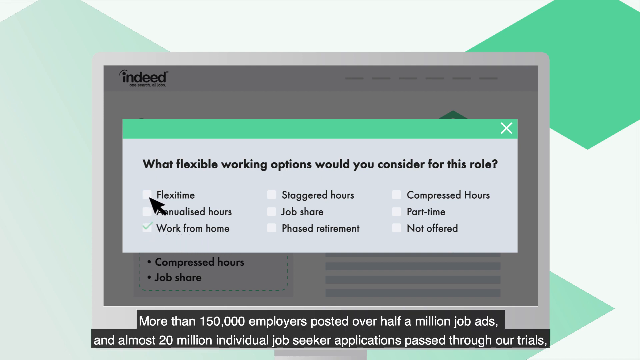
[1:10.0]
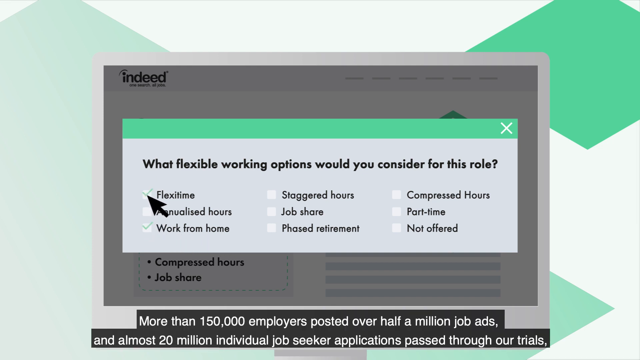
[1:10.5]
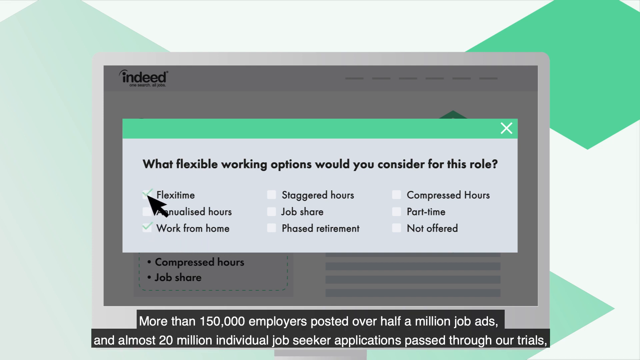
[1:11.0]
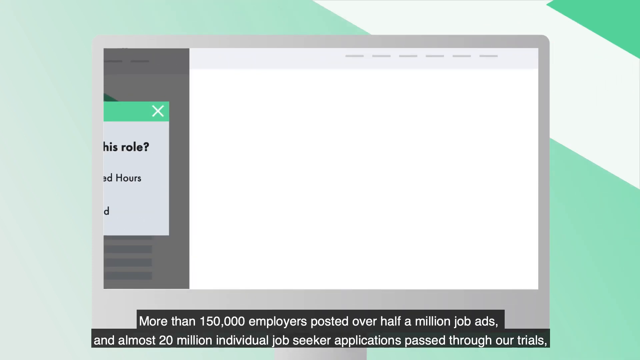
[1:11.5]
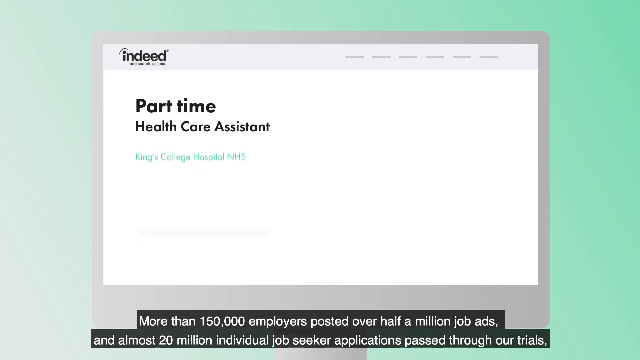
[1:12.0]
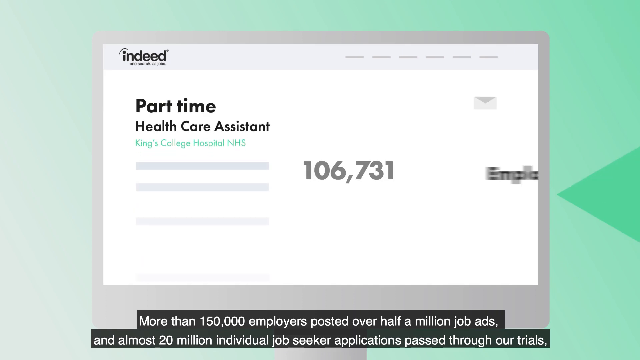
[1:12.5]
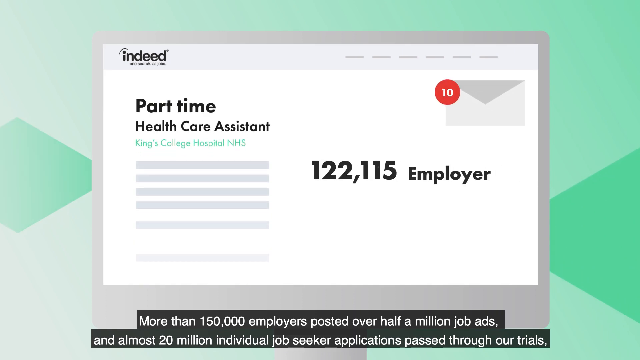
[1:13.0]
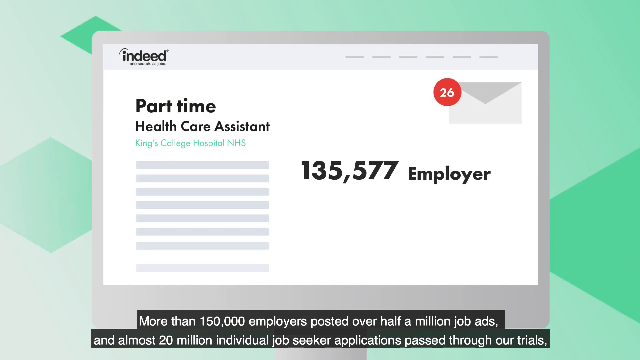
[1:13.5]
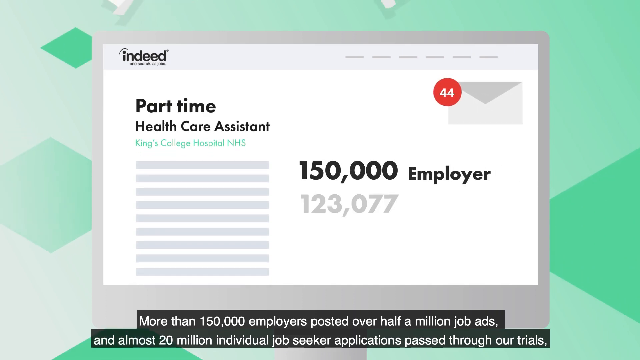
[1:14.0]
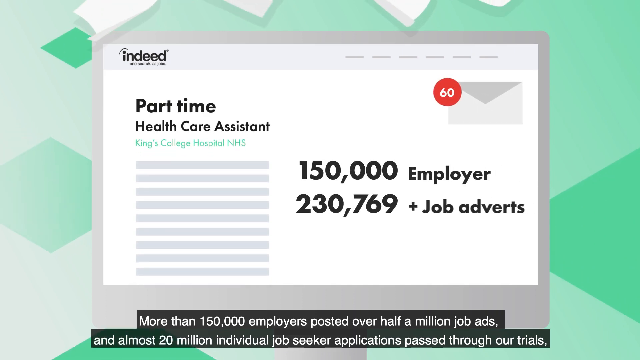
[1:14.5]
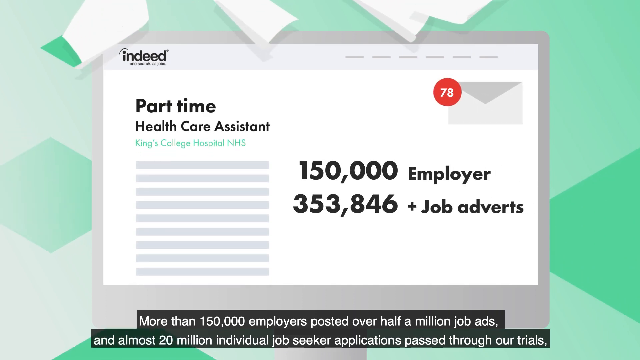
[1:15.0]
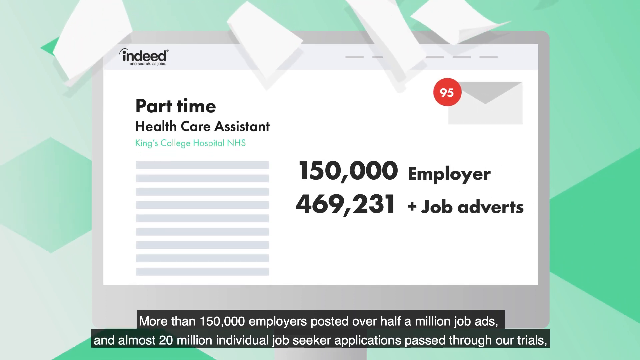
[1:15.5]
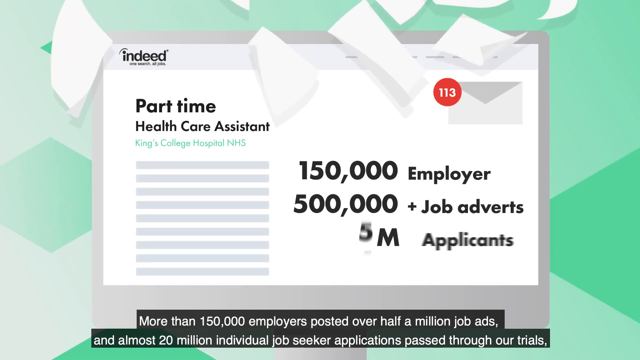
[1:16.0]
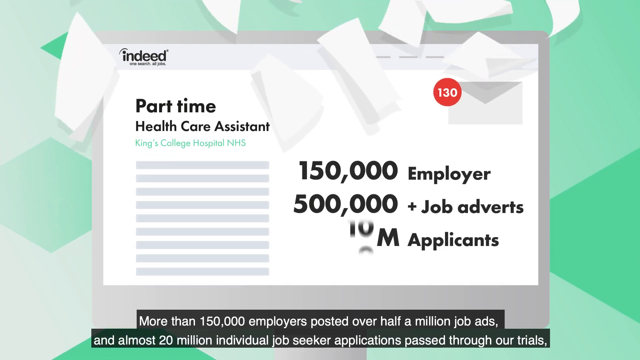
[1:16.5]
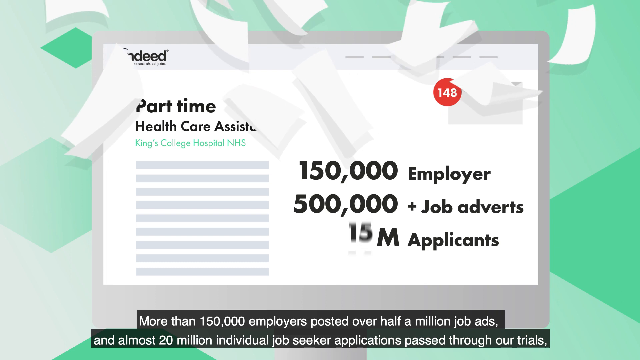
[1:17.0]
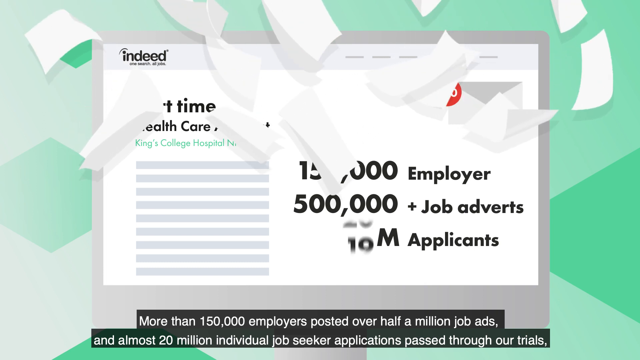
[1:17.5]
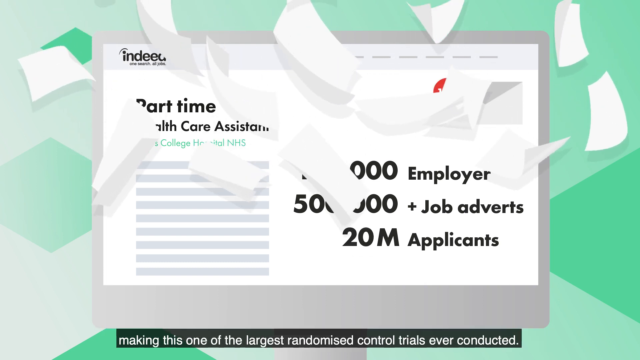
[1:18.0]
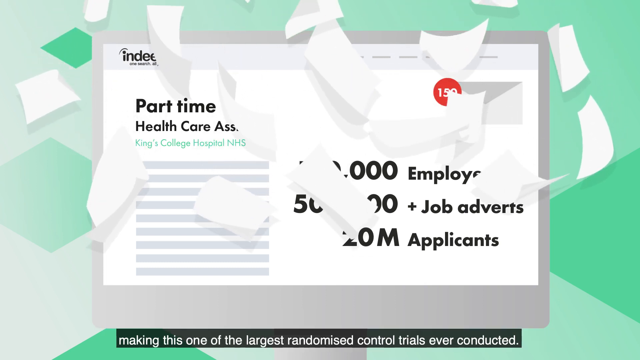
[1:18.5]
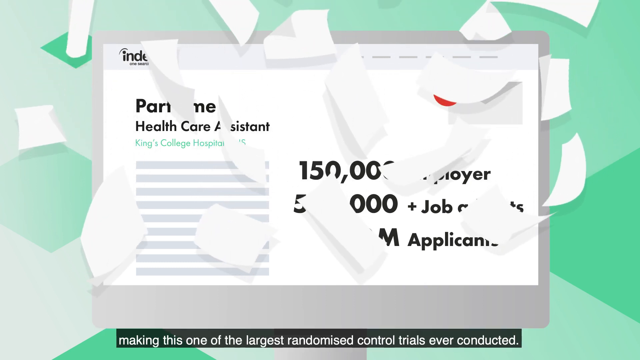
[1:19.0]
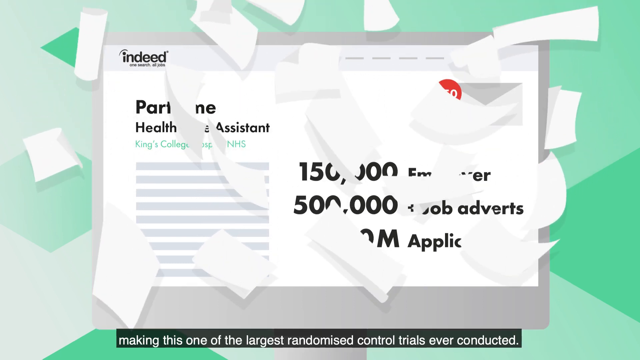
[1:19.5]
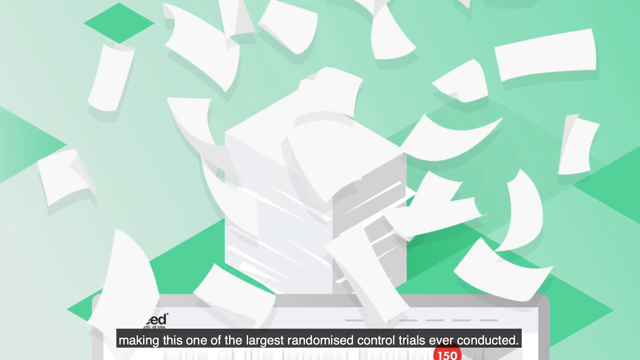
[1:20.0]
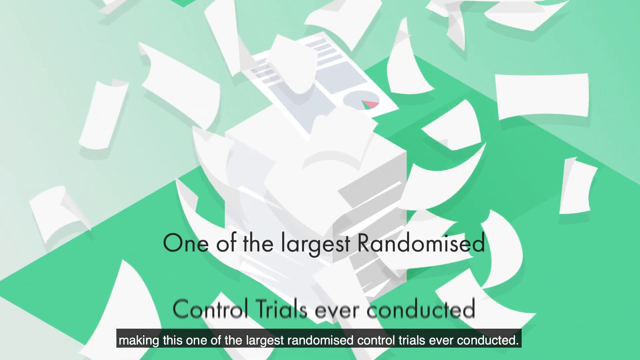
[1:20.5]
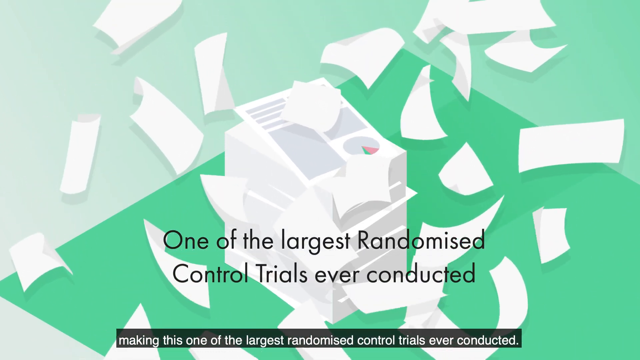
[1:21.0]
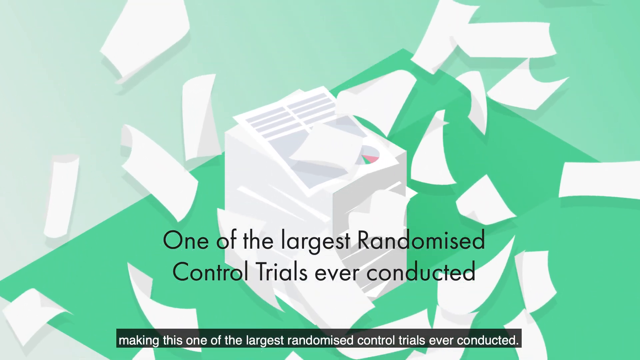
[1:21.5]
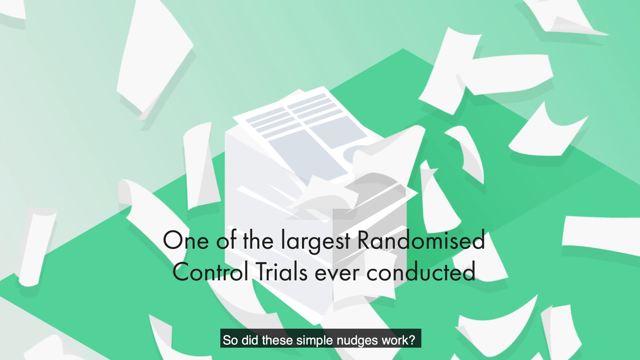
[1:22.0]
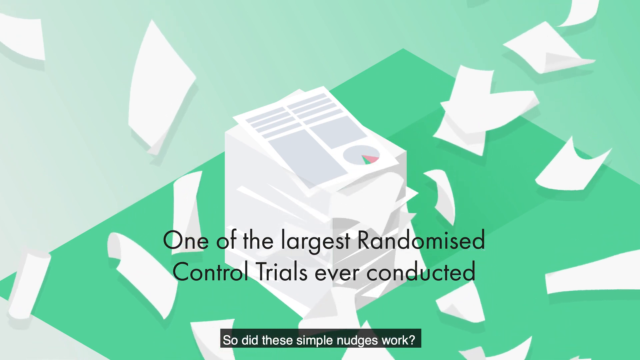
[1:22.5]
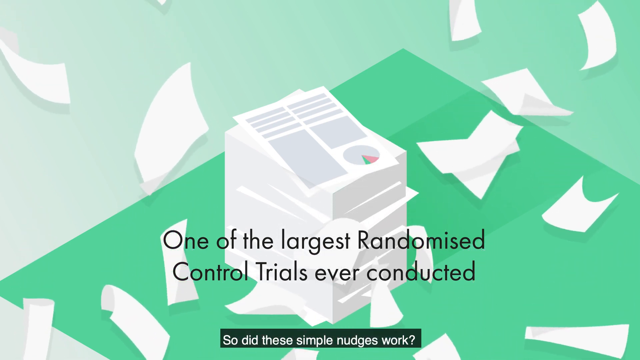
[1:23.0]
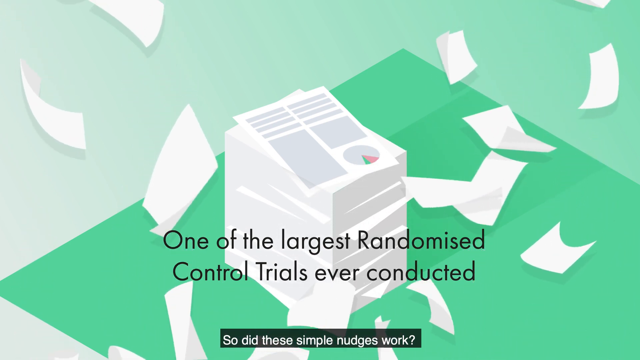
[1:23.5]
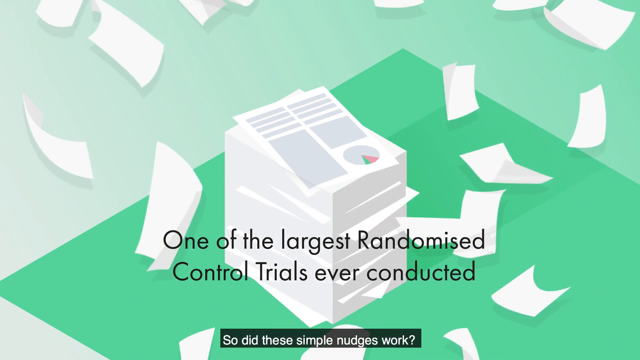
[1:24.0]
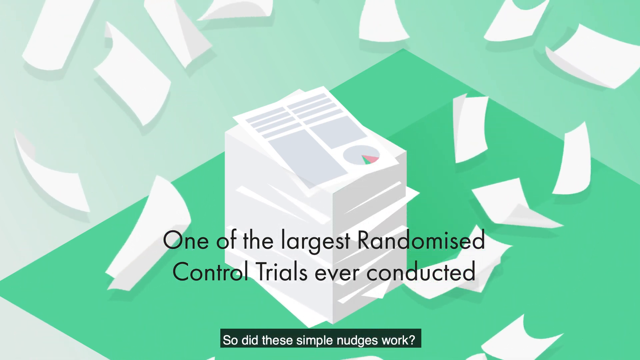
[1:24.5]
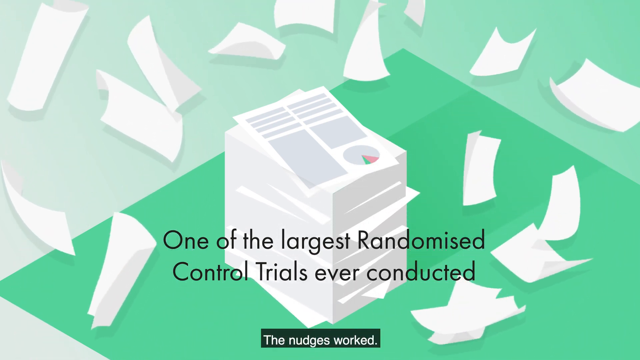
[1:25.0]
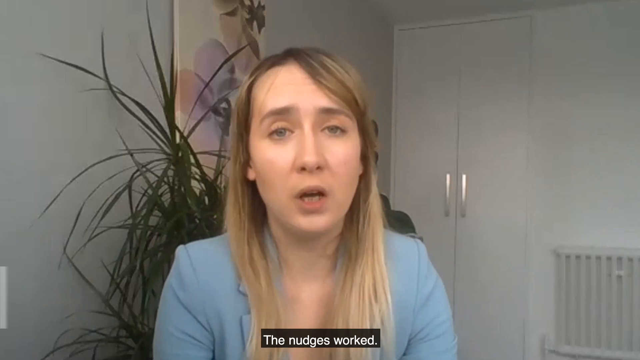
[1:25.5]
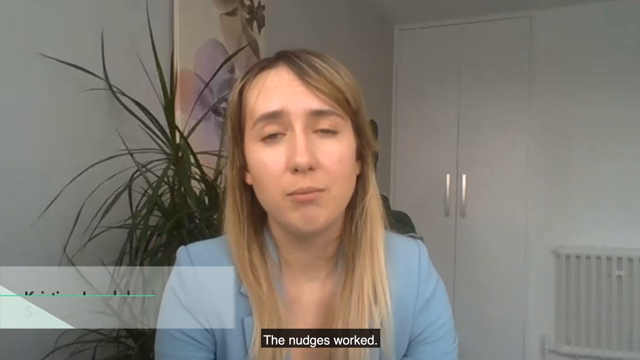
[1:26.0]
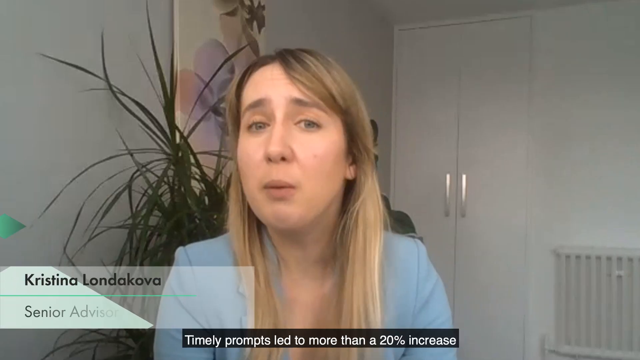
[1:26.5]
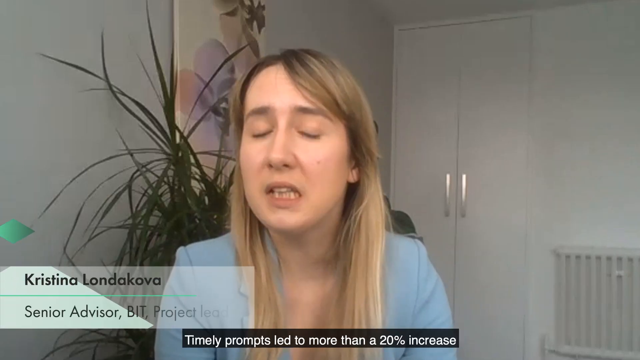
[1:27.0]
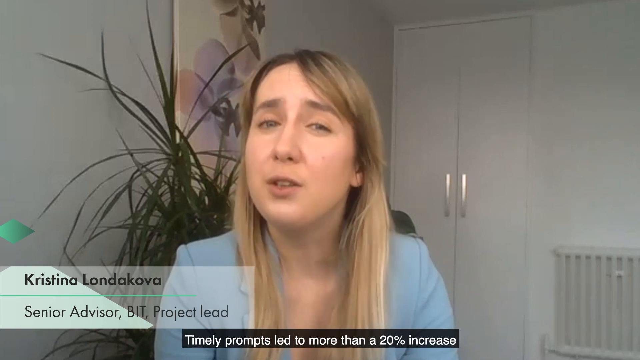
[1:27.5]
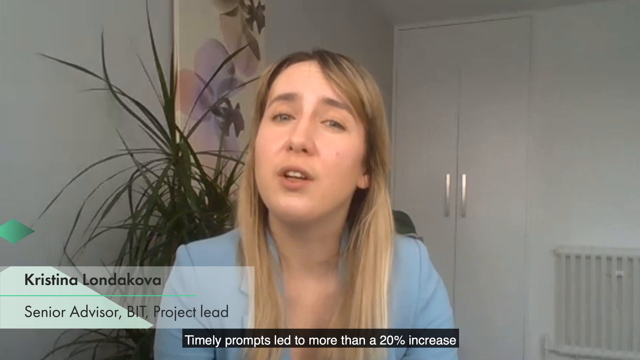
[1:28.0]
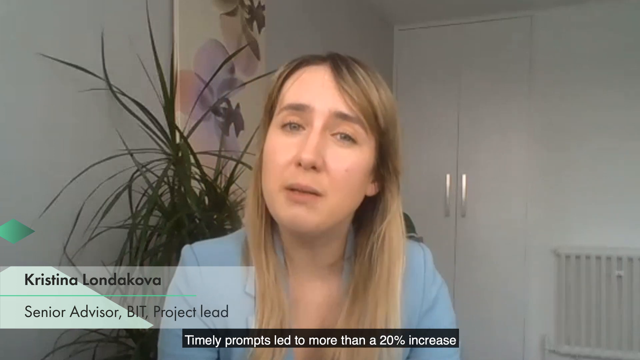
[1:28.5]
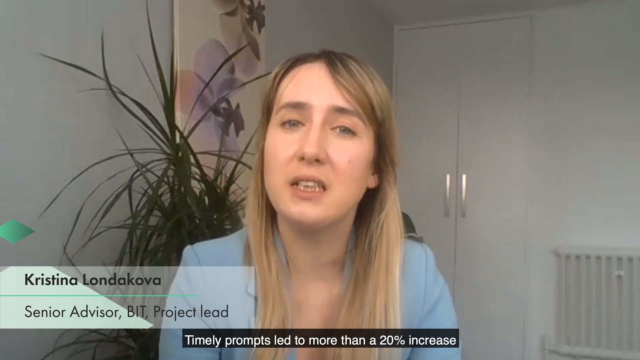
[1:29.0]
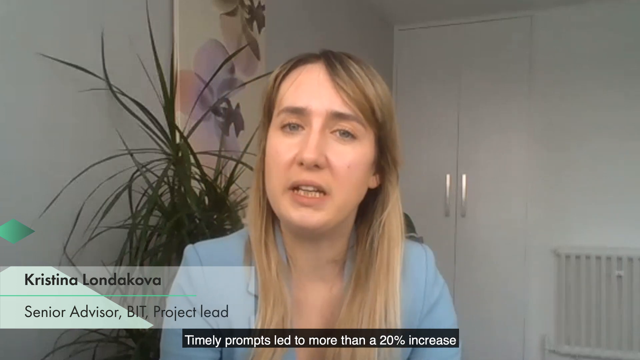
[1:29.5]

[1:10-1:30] Captions in a black box with white font run along the bottom. The simulated laptop screens are gray; in the center is a gray pop-up with a green bar at the top, and a black mouse cursor goes over various flex options, choosing the flex time and work-from-home options. The background behind the laptop is pale mint green and green with geometric patterns. The caption reads "more than 150,000 employers posted over half a million job ads and almost 20 million individual job seeker applications passed through our trials." The video moves to a different screen on the fake laptop that reads "part-time healthcare assistant, King's College Hospital, NHS," with the number 101,923 toward the right that keeps going up, and a small fake envelope with a notification number in the corner. The caption reads "making this one of the most largest randomized controlled trials ever conducted." A cartoon graphic follows, with a mint and green background and white papers raining down; in the center are reams of printer-type paper, and something like a pie graph is in the corner. The video cuts to a blonde woman in the center of the frame with brownish eyebrows, apparently wearing a blue blazer. Her name is shown as Kristina LONDAKOVA, "Senior Advisor, BIT Project Lead," and she says the prompts led to more than a 20% increase.